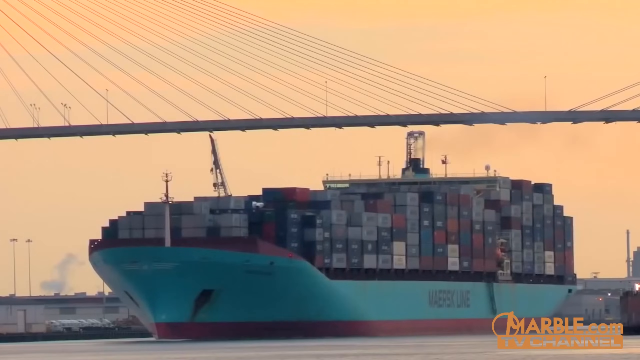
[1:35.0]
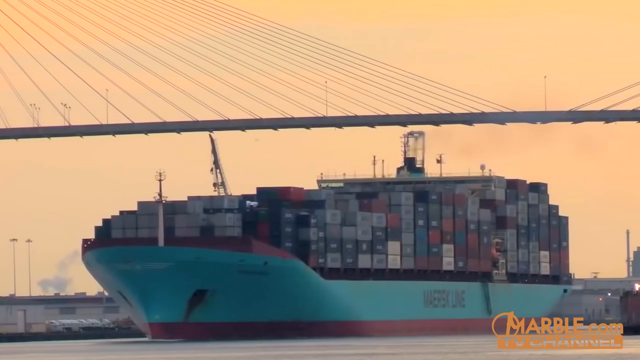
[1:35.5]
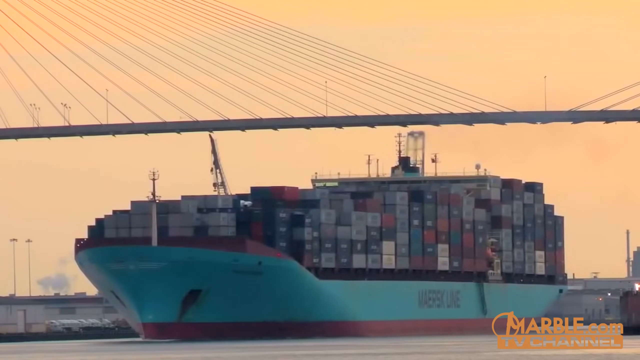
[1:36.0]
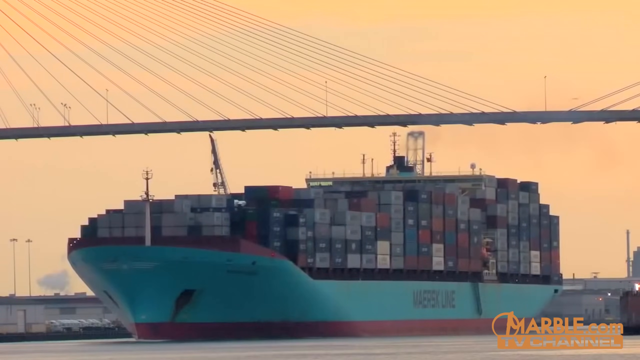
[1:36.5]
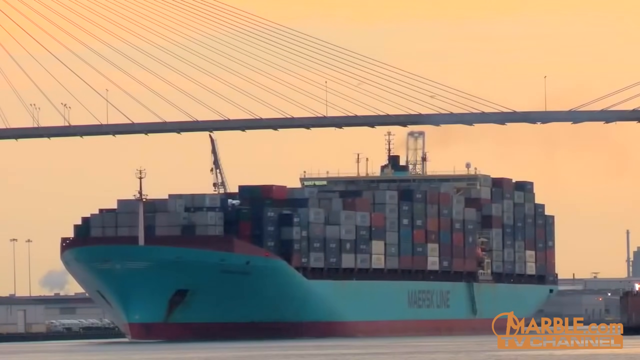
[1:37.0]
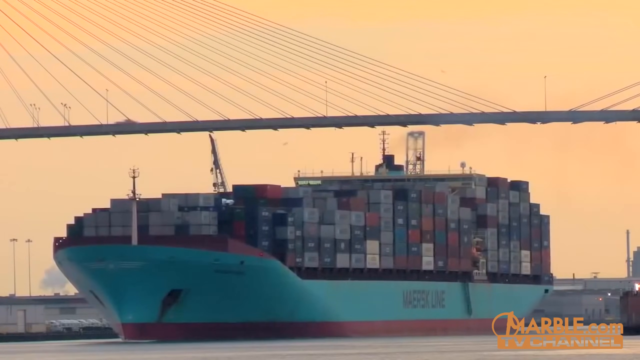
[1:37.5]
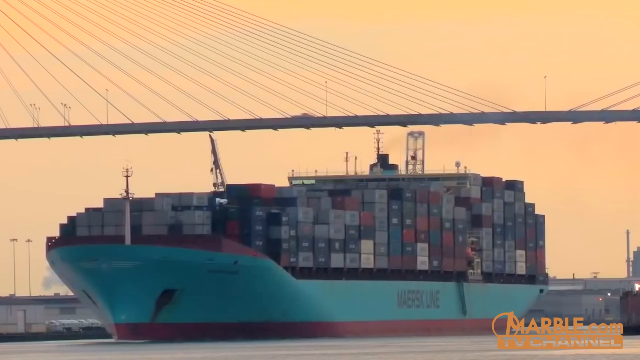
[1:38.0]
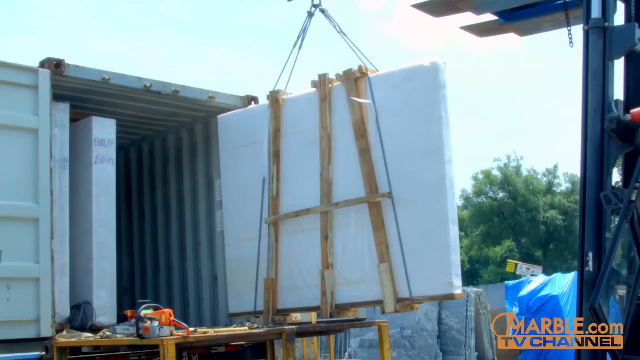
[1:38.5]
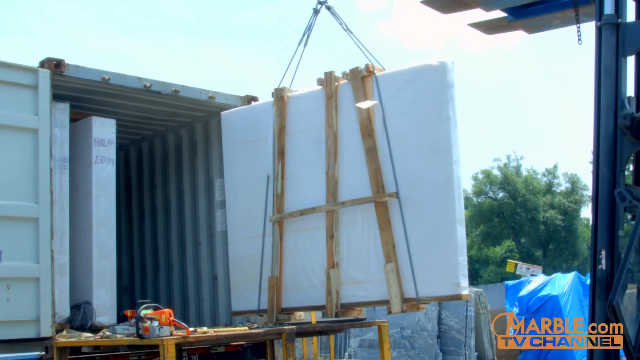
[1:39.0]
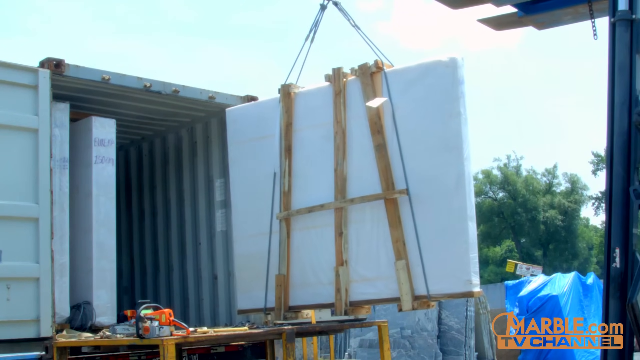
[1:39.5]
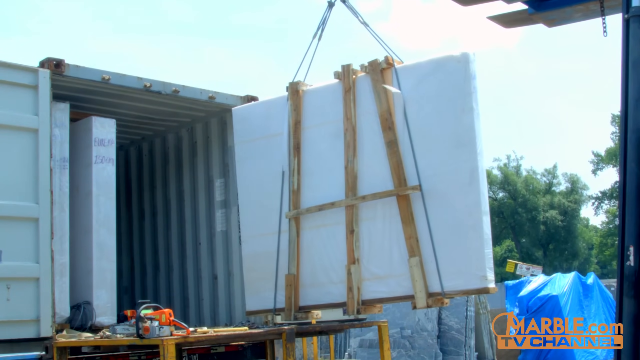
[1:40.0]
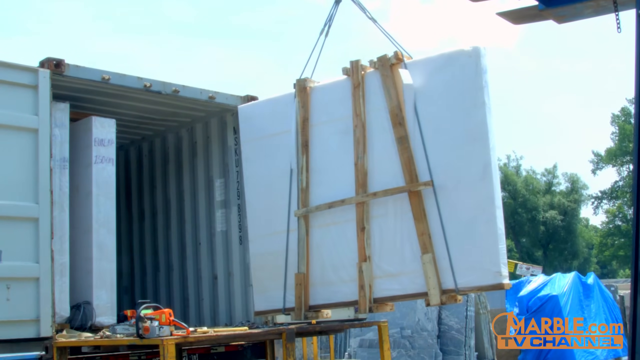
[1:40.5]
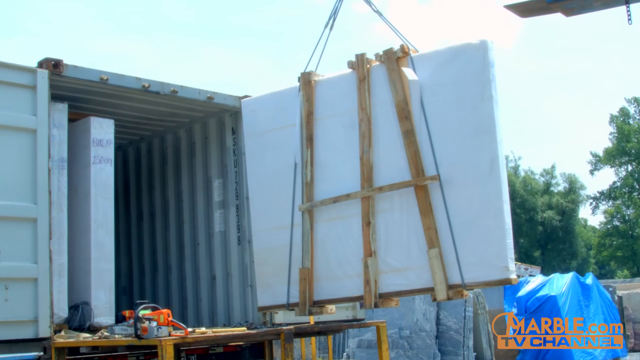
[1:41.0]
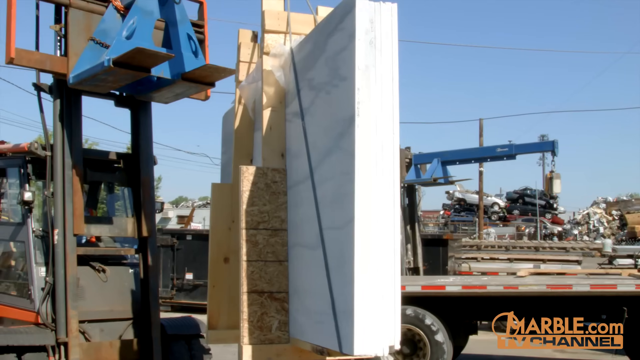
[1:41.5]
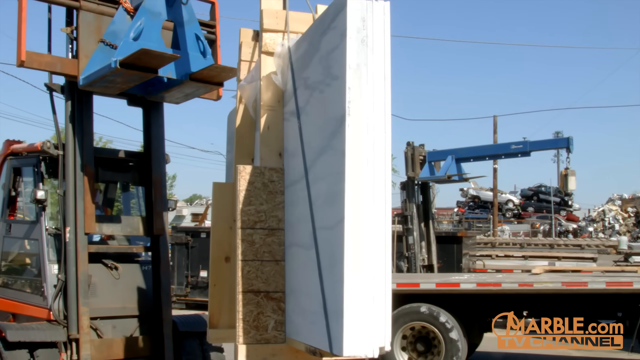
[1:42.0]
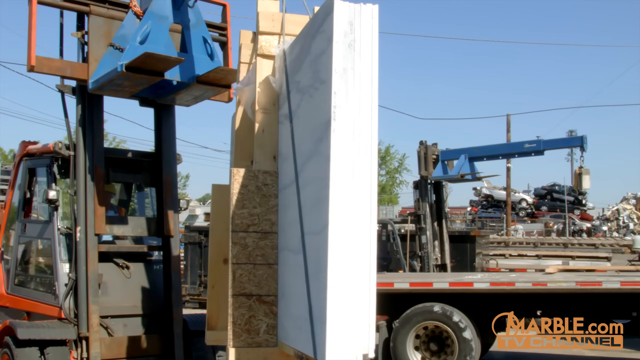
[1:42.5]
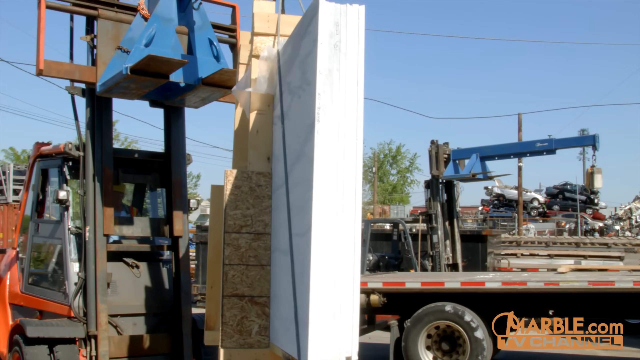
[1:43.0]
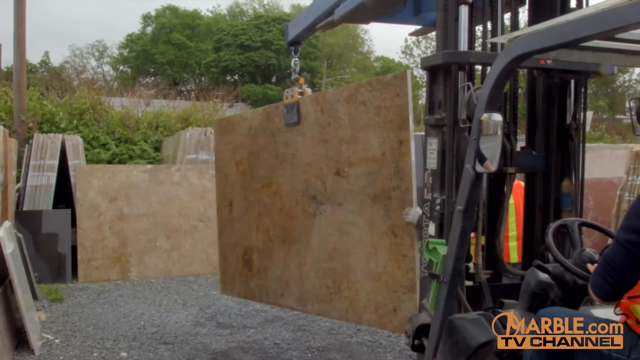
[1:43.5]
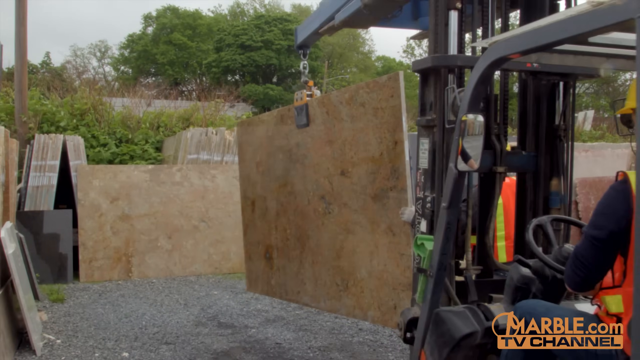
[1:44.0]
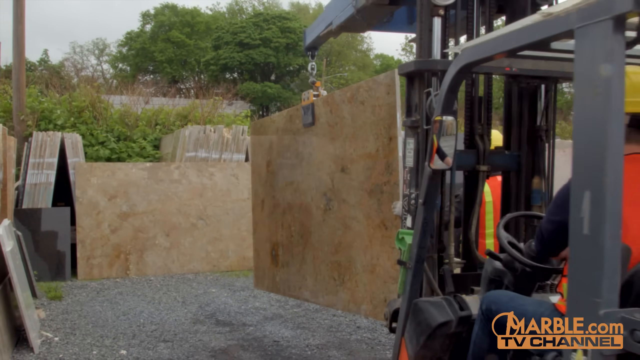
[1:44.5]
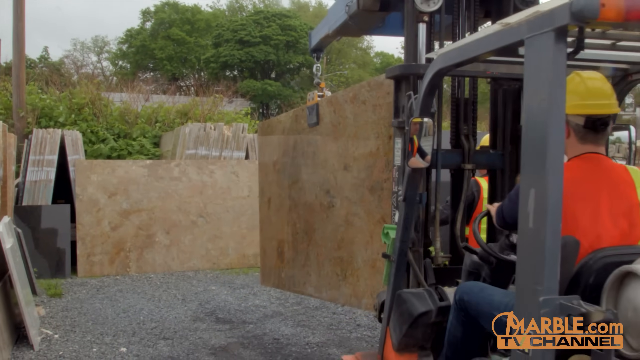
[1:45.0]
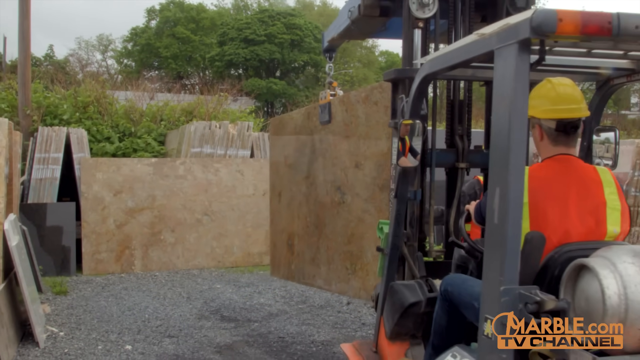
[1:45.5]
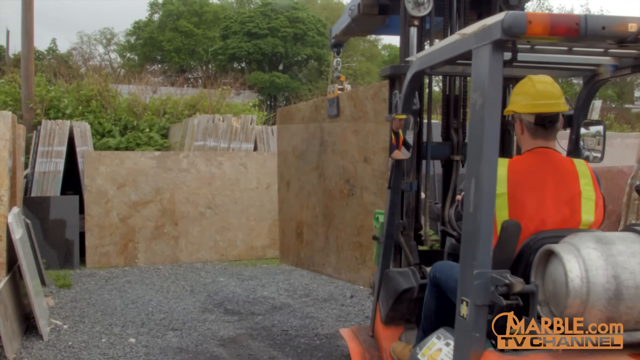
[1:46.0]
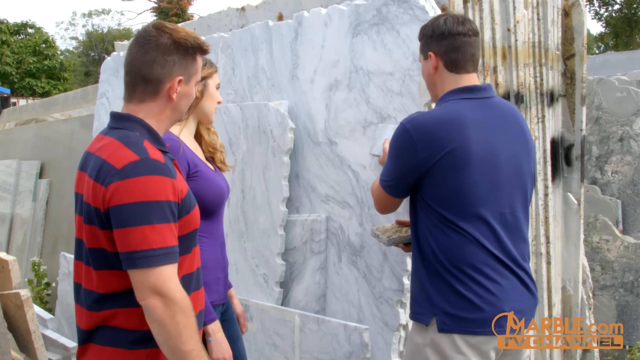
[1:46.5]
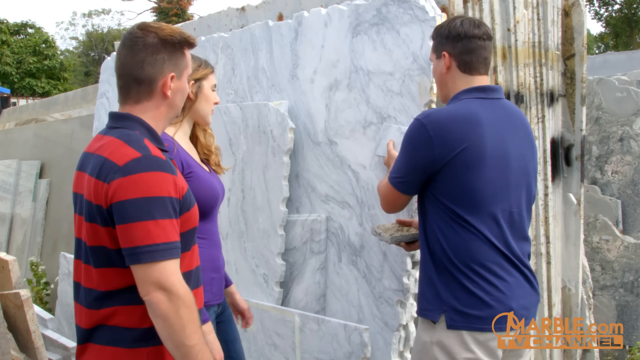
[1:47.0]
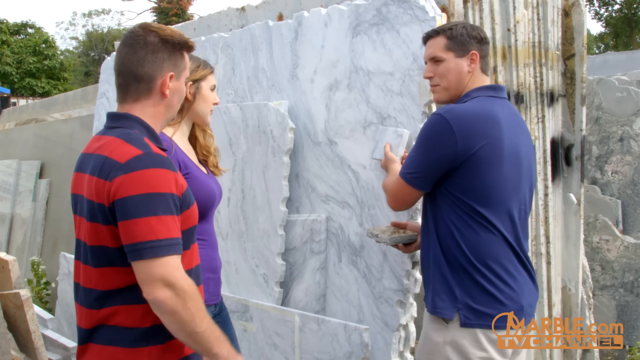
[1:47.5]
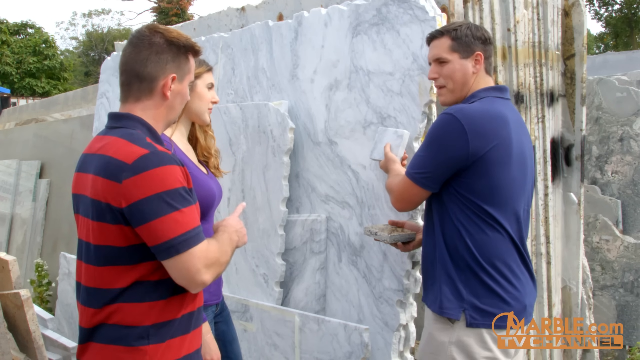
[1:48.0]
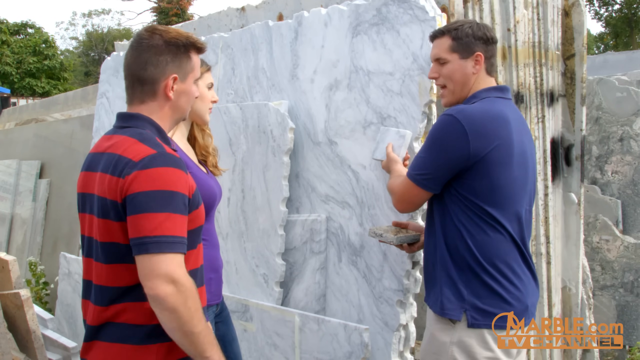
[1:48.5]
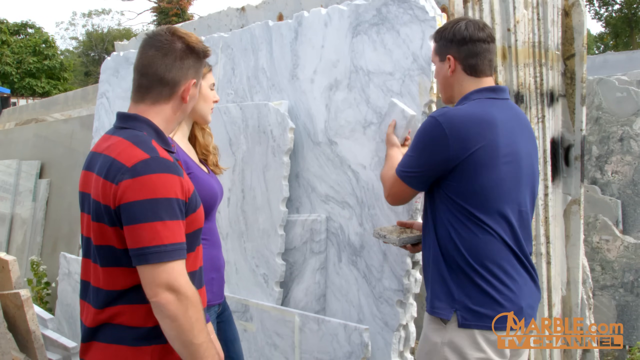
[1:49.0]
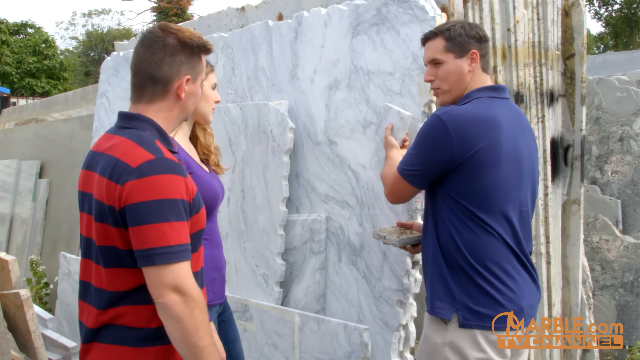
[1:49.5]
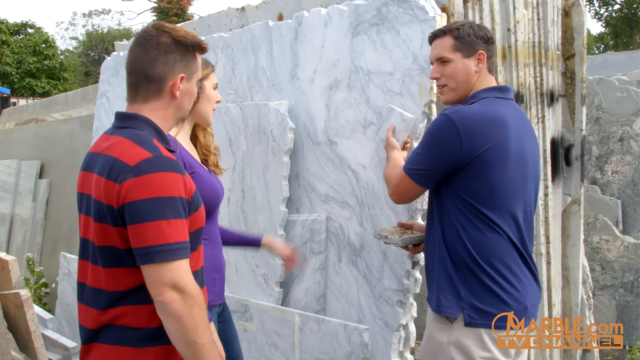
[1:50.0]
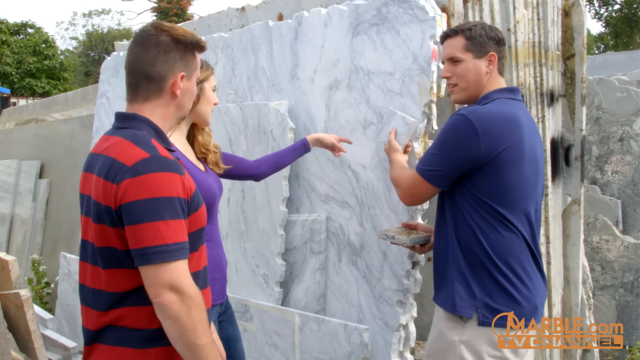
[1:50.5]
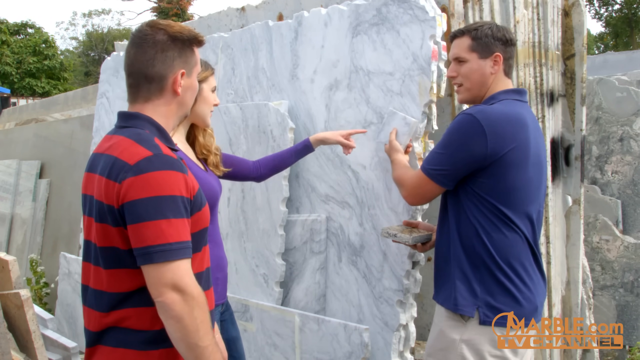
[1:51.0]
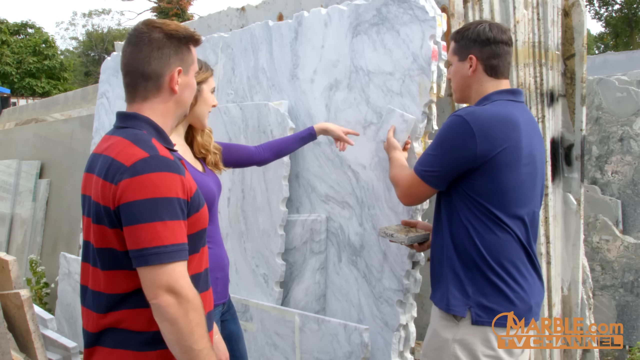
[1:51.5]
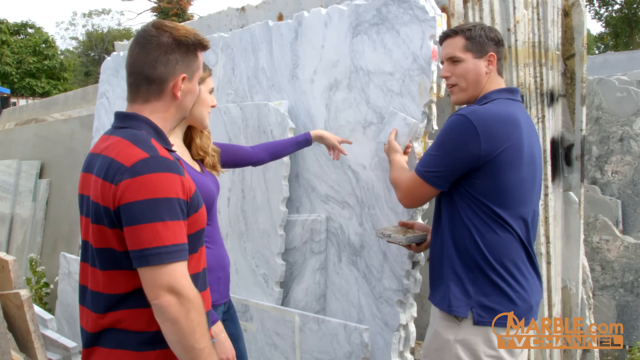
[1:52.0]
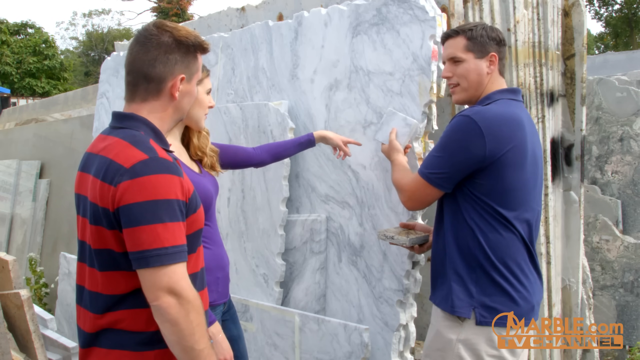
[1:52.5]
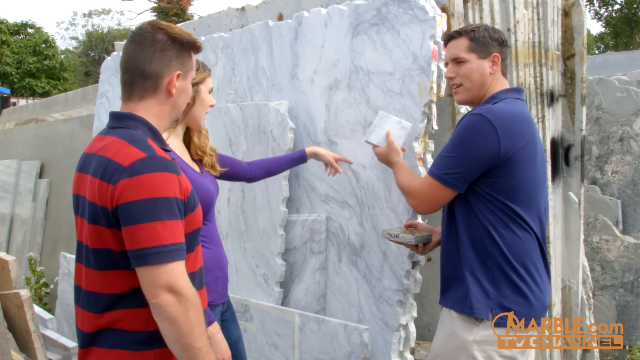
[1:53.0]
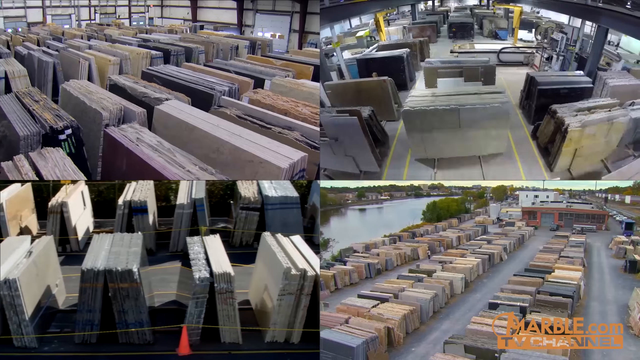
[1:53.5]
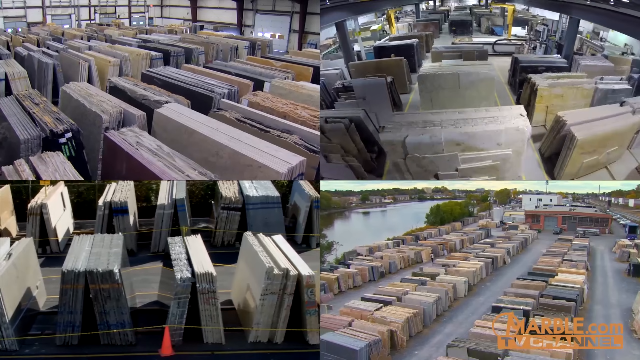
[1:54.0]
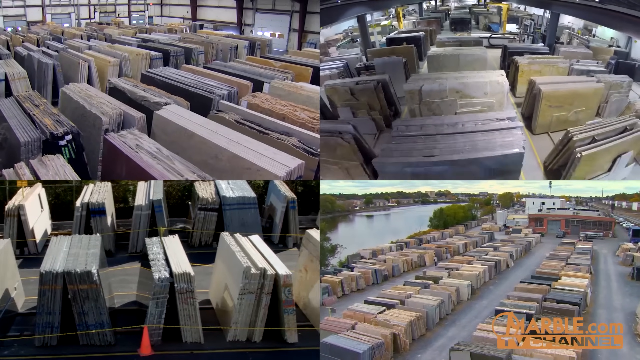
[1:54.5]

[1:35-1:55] The barge moves slowly down the river, passing underneath a thin-looking bridge held aloft by a bunch of wires. Next, a piece of marble is pulled out of a shipping container; it is secured with boards, with wires holding it at the top. It moves kind of slowly out as the camera kind of pans around it, and the forklift moves it into some kind of area and sets it down. Then three people look at a stack of marble. The man on the right side wears a blue shirt and holds a small piece, like a sample, up to the larger pieces of marble. On the other side are a man in a red and blue striped shirt and a woman in a purple shirt. They all seem to look at and discuss the marble, and the woman points at it. The video then shows four different sections of what looks like different types of marble.